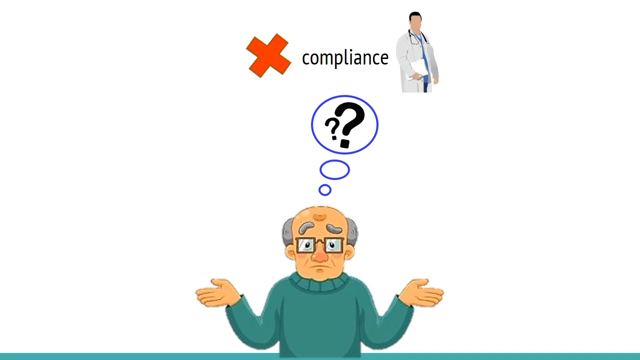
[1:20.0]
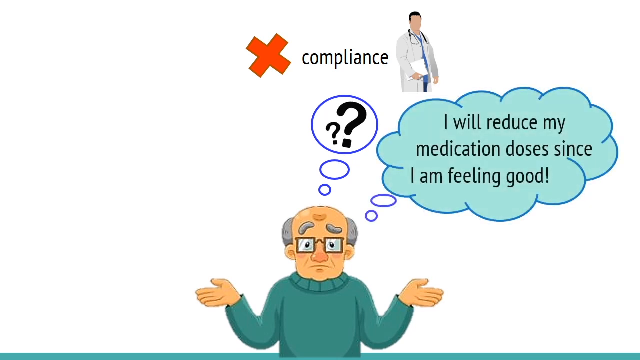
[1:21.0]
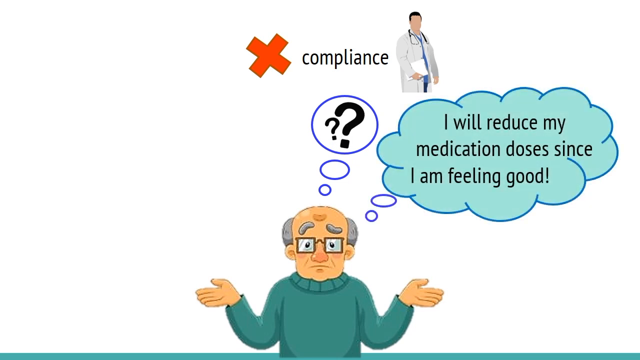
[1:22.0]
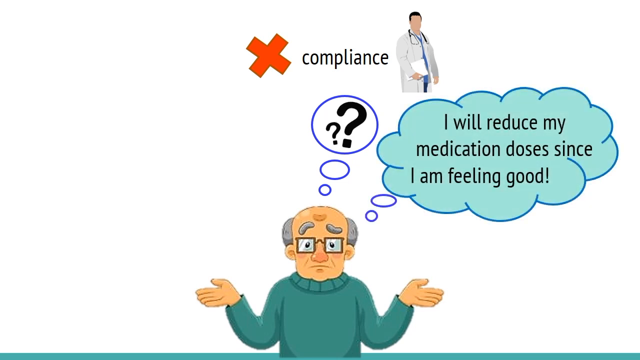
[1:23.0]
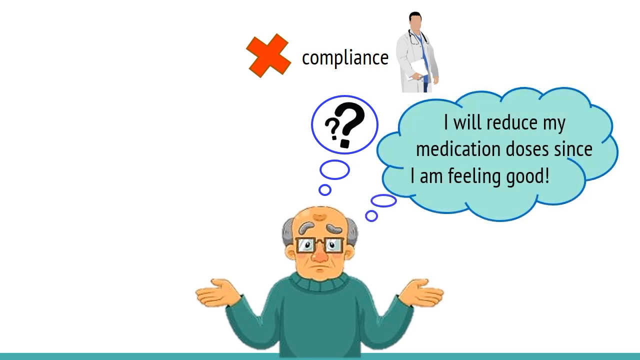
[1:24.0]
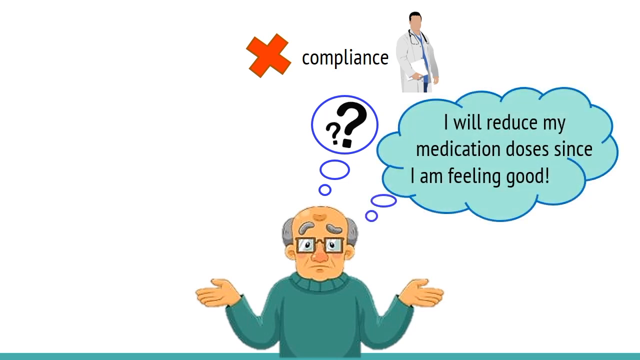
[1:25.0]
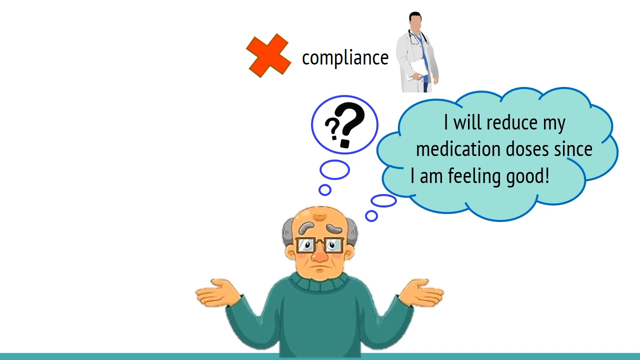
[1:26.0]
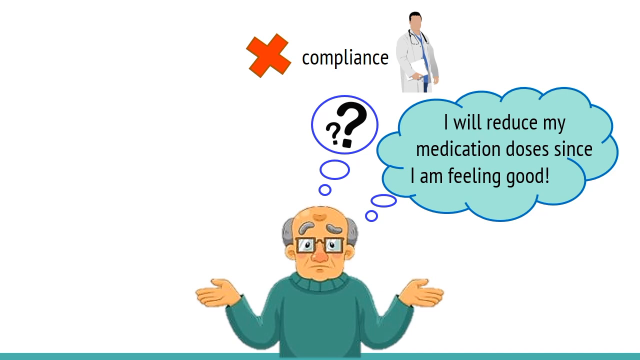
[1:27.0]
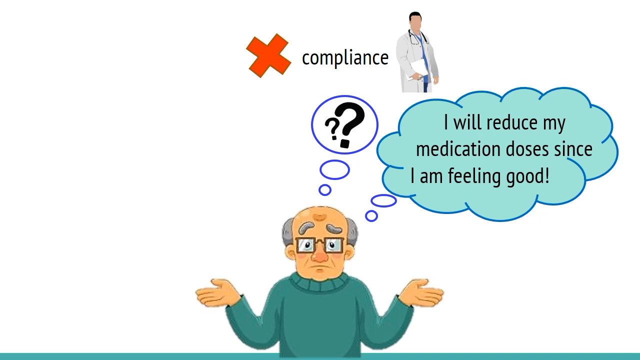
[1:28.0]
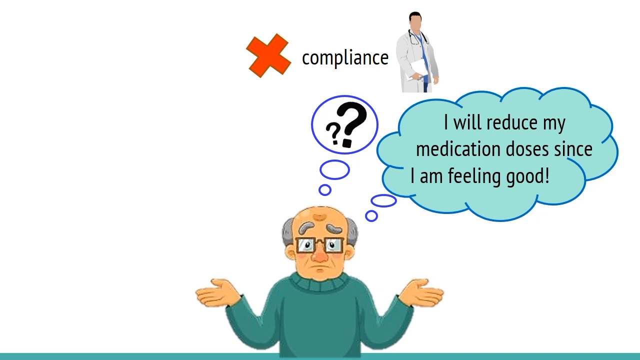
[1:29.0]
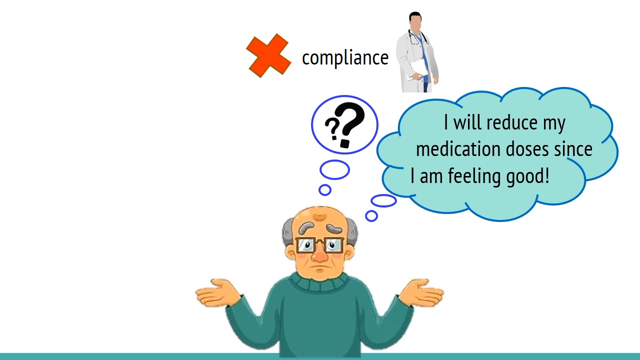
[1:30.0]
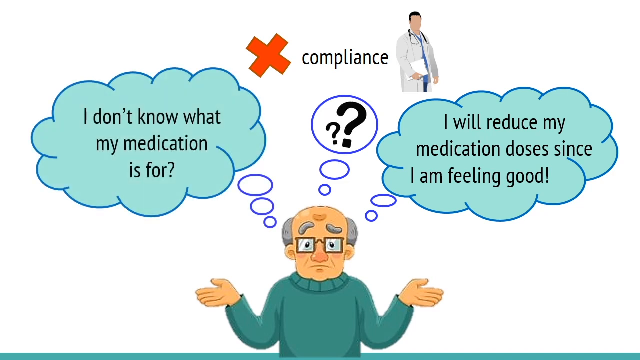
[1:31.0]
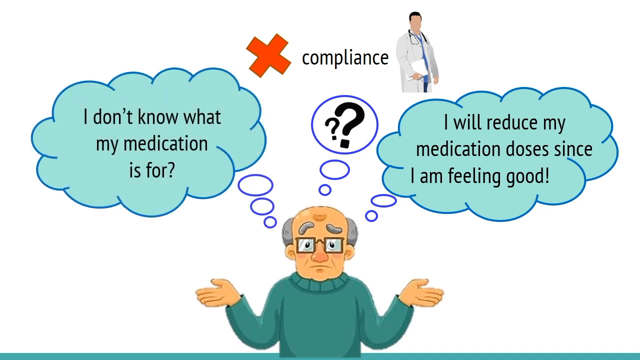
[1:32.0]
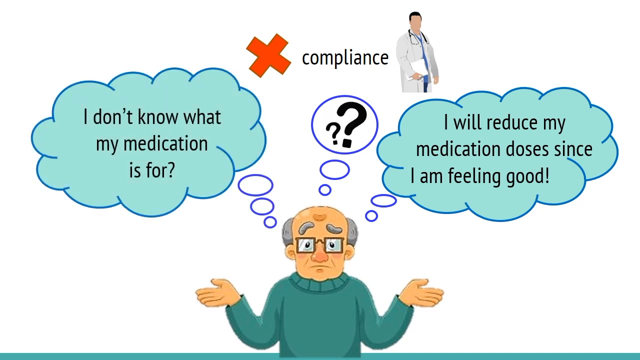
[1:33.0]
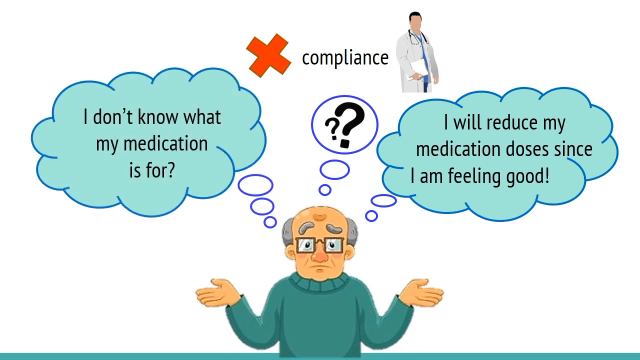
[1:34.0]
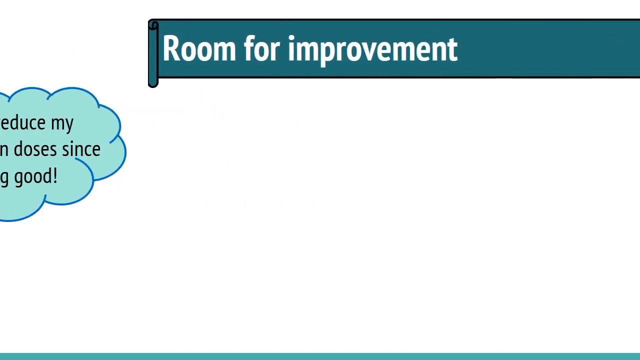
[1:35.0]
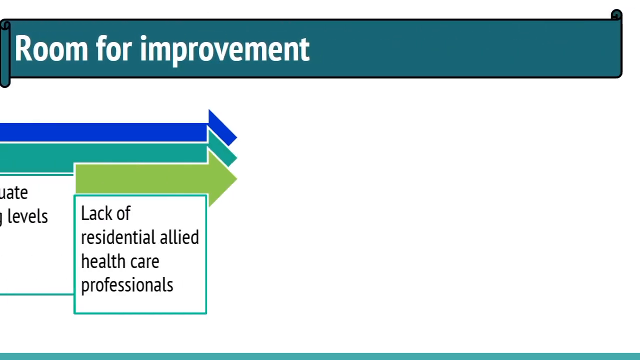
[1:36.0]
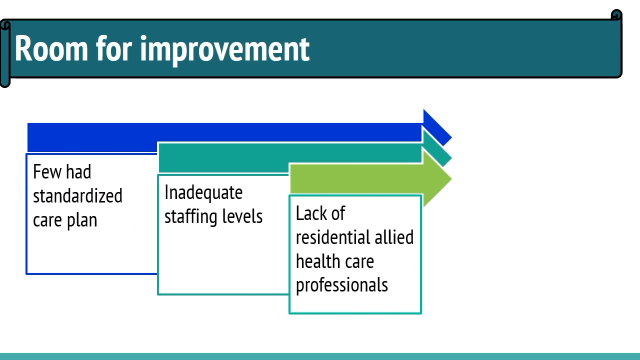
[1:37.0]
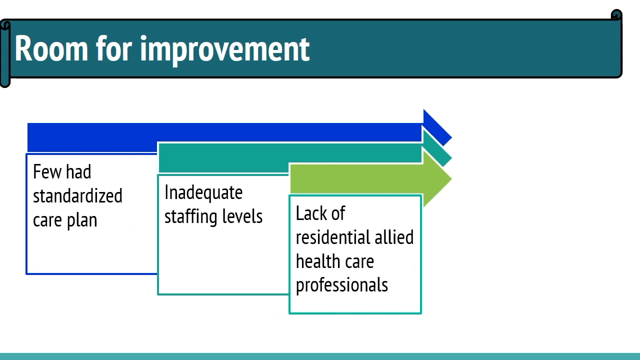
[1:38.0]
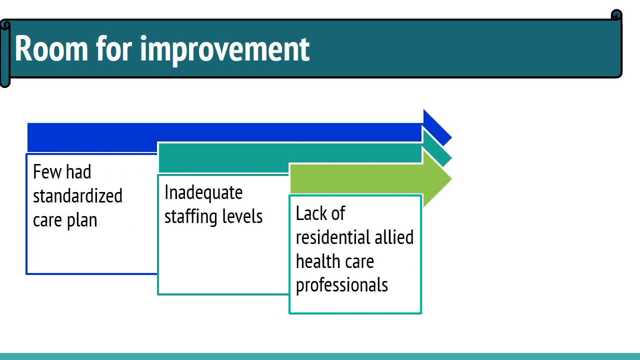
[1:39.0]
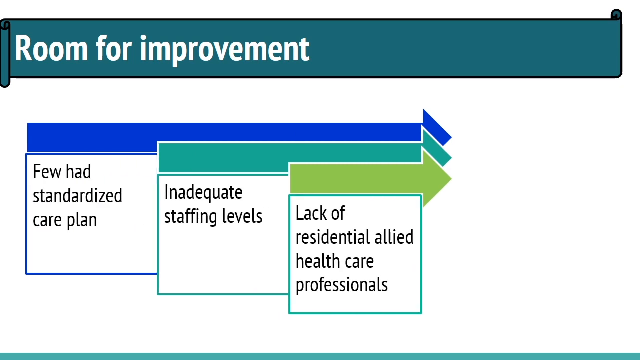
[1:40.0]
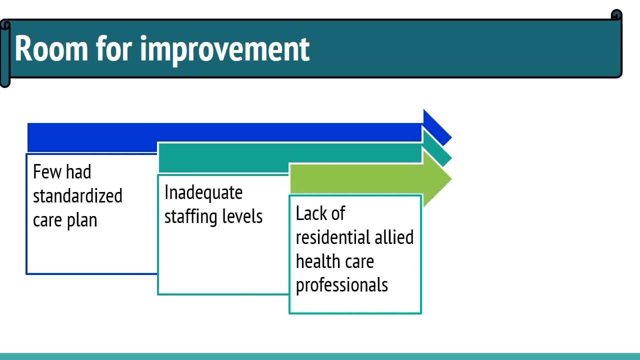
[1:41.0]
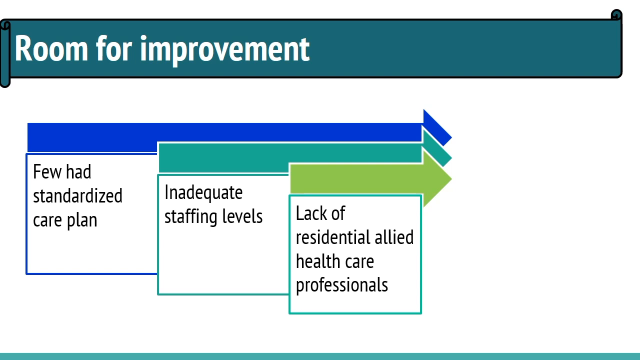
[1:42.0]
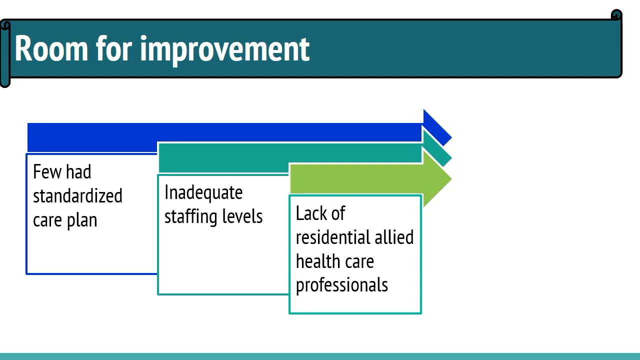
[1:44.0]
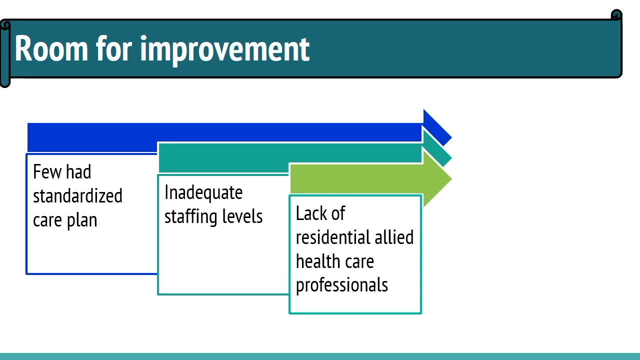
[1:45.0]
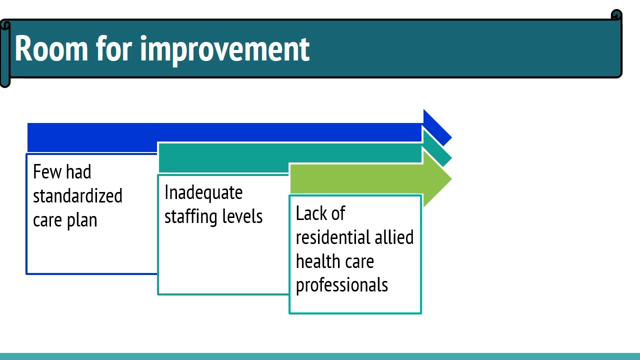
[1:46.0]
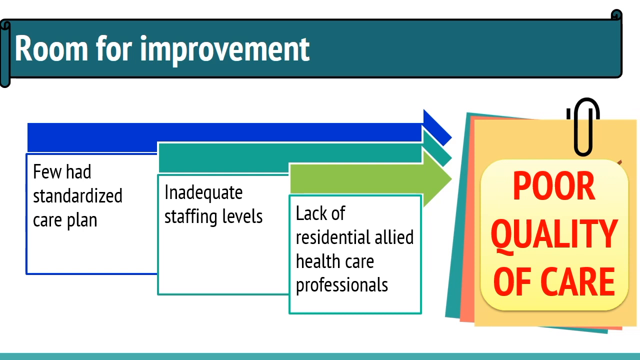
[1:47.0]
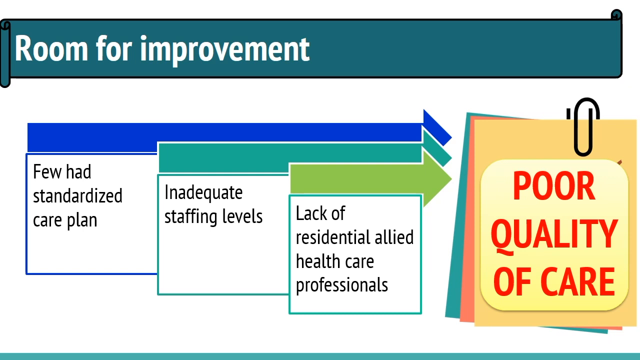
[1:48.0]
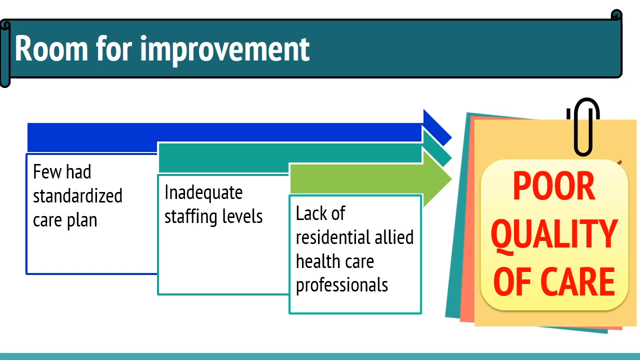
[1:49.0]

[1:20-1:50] The elderly man stands with the question marks in a bubble over his head. At the top is a red X with the word "compliance." A picture of a doctor holding a chart appears, followed by a bubble reading "I will reduce my medication doses since I am feeling good," and the man says "I don't know what my medication is for." On the next page, a blue flag comes across the top reading "room for improvement" in large white letters. Below are three boxes with large arrows pointing to the right: the first reads "few had standardized care plan," the second "inadequate staffing levels," and the third "lack of residential allied healthcare professionals."